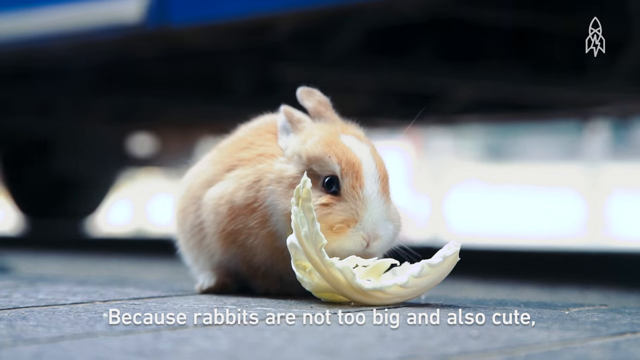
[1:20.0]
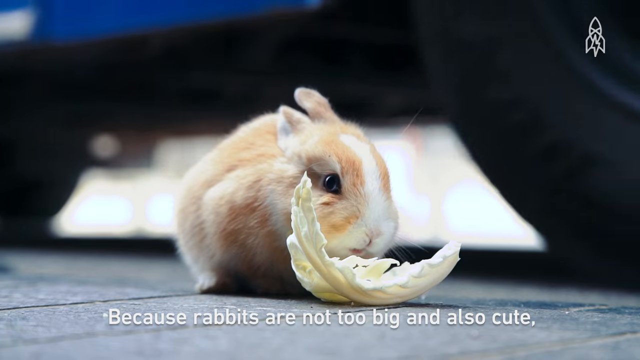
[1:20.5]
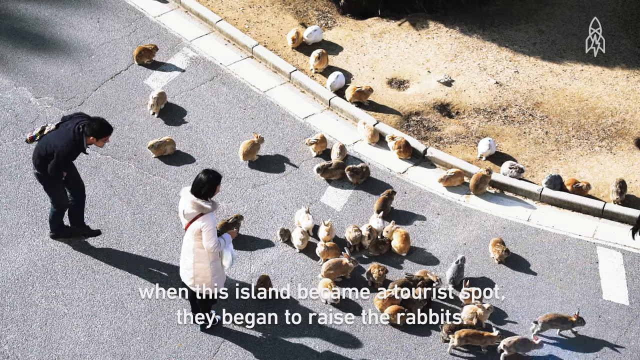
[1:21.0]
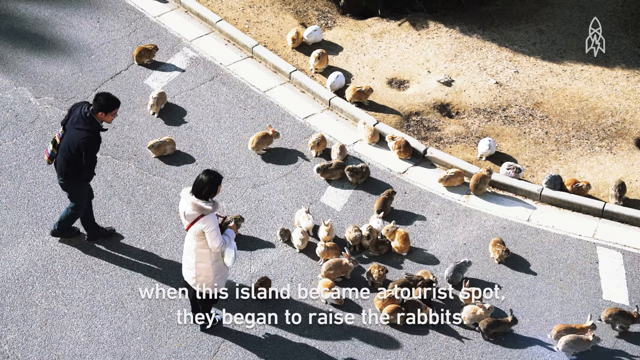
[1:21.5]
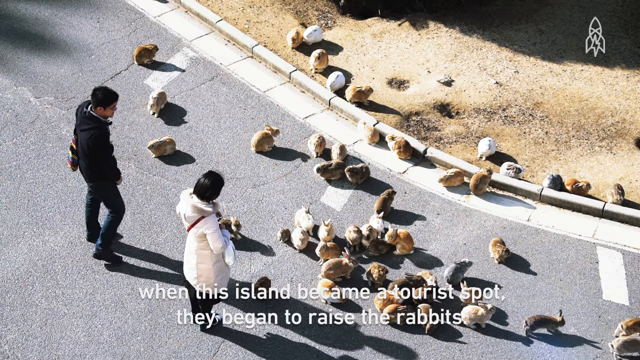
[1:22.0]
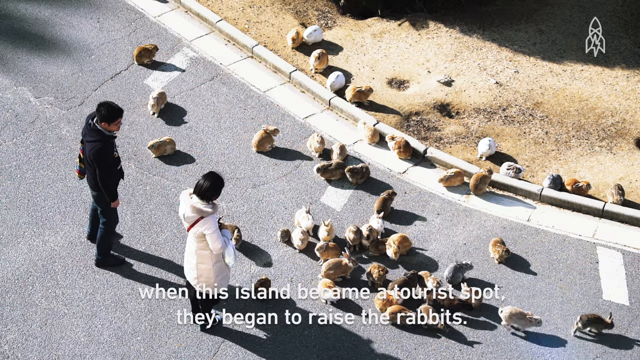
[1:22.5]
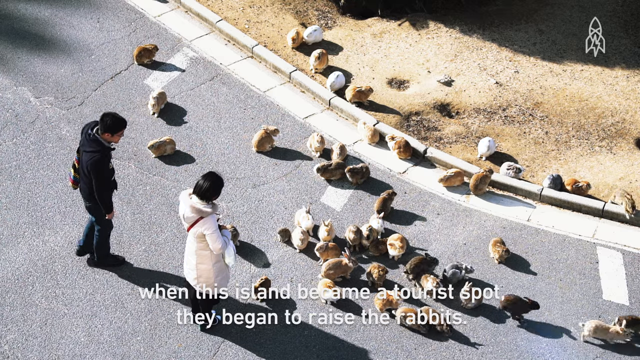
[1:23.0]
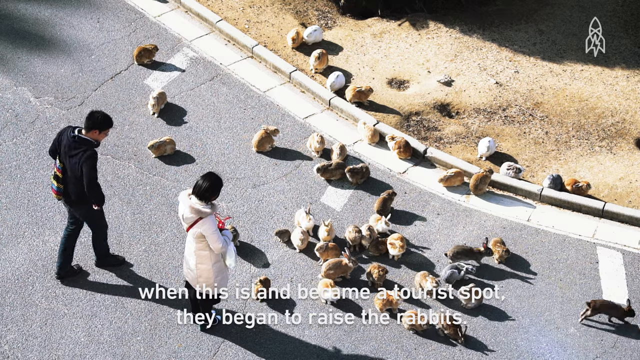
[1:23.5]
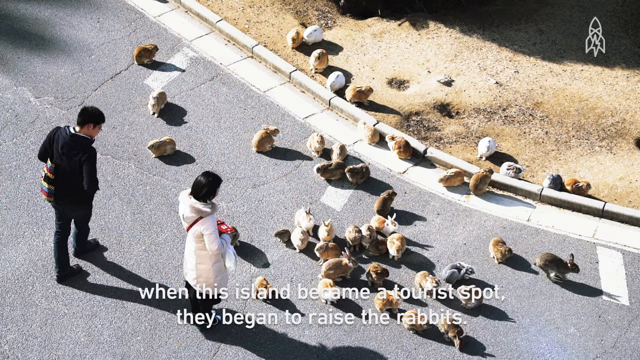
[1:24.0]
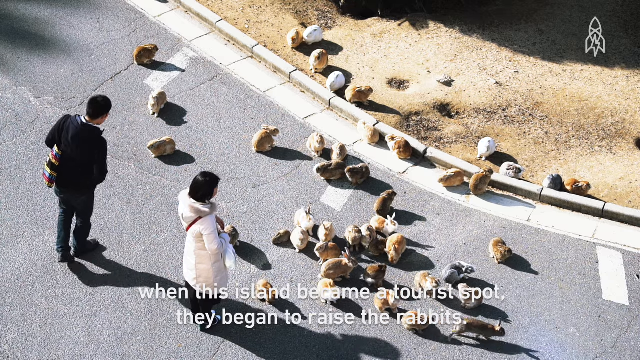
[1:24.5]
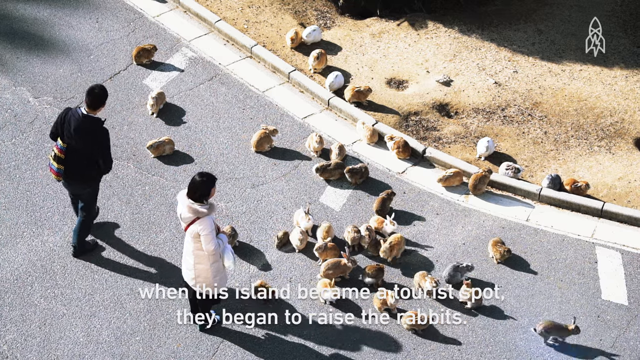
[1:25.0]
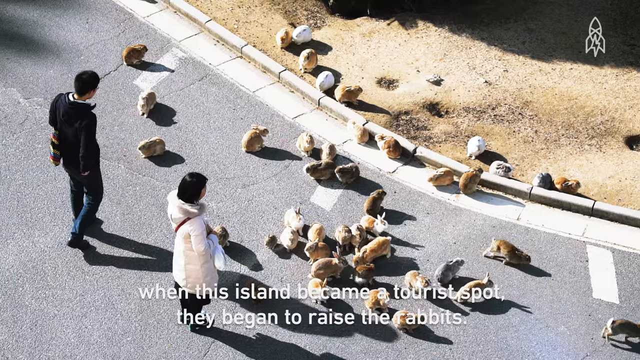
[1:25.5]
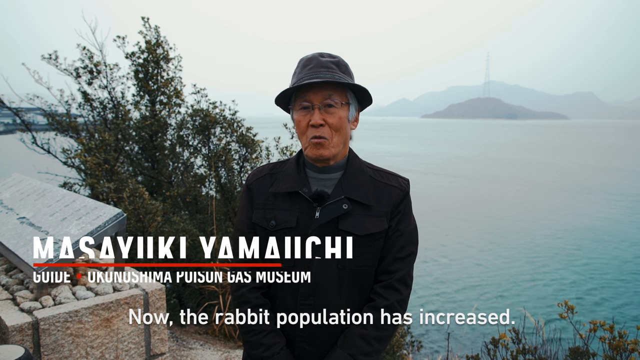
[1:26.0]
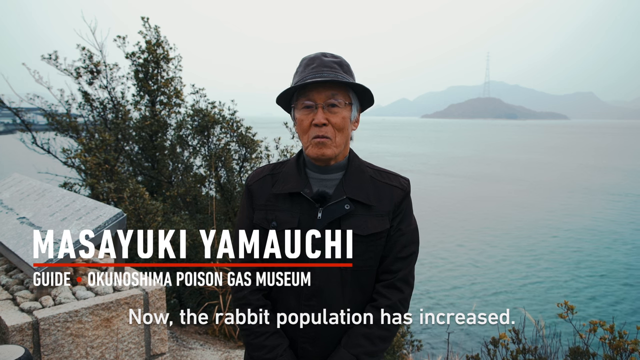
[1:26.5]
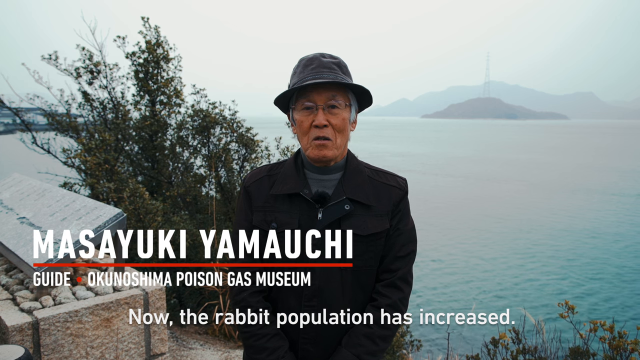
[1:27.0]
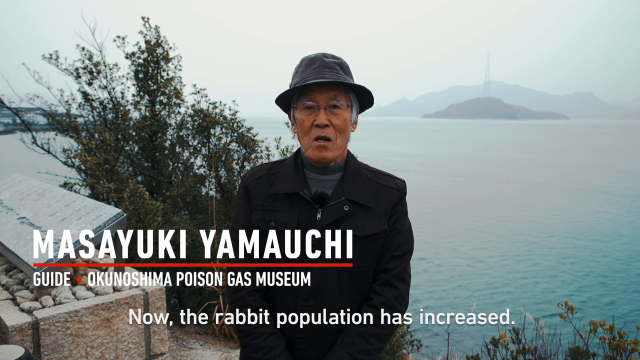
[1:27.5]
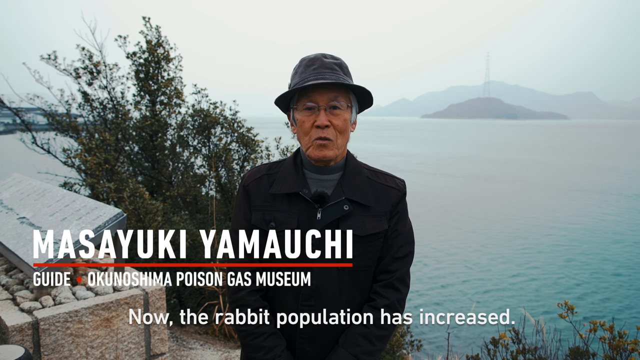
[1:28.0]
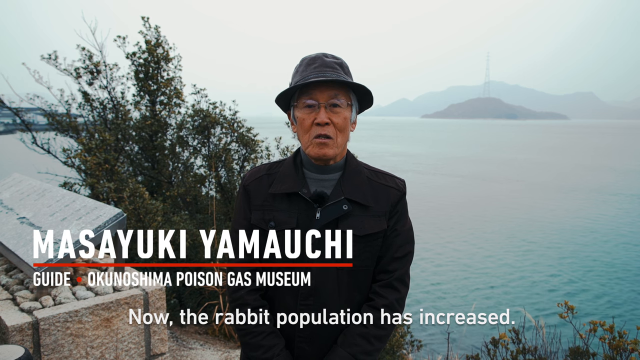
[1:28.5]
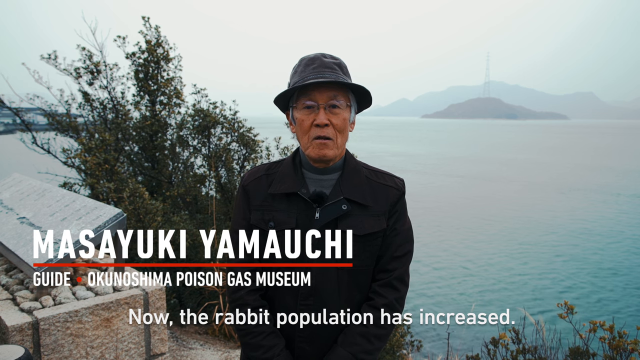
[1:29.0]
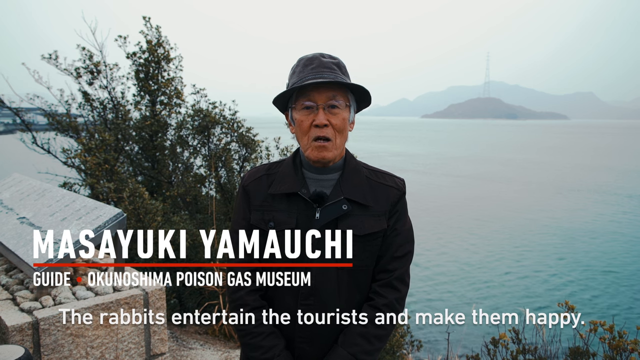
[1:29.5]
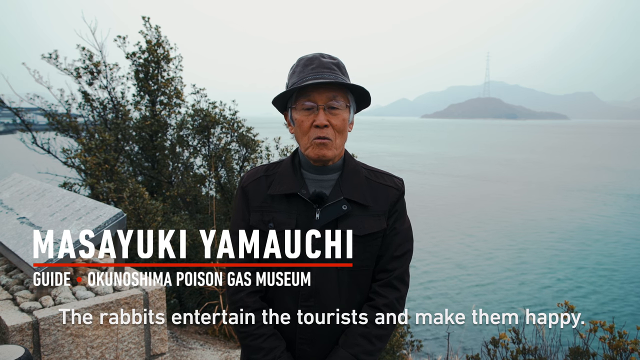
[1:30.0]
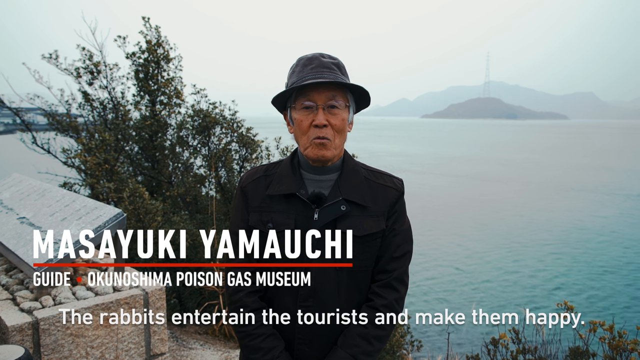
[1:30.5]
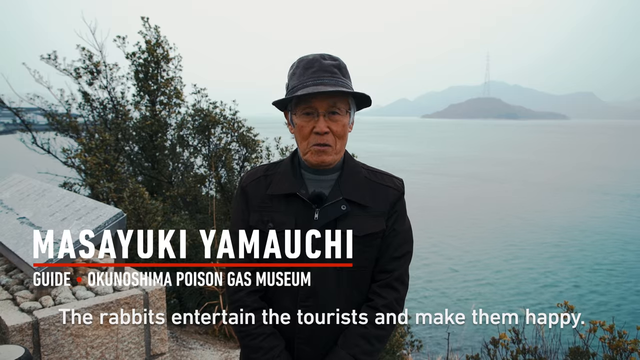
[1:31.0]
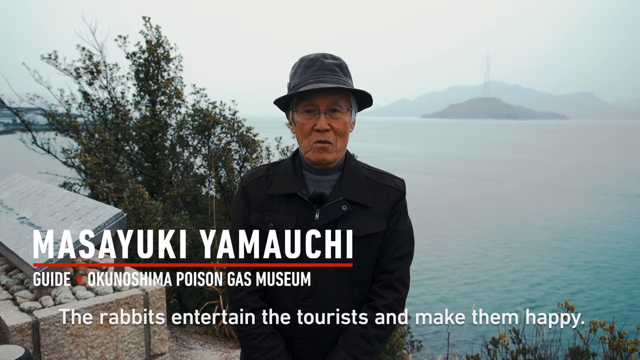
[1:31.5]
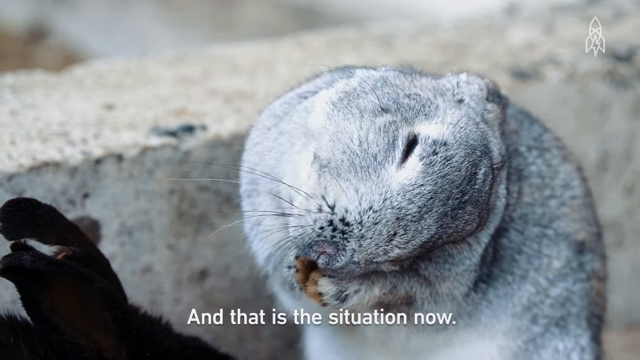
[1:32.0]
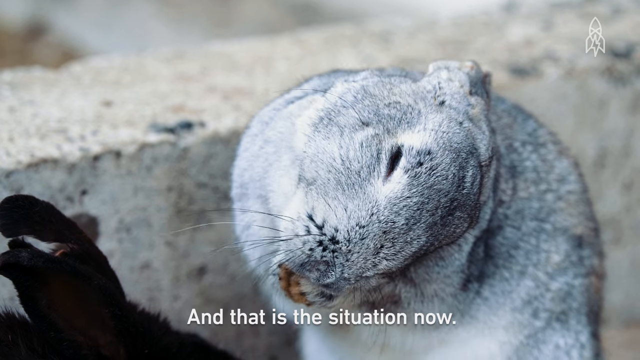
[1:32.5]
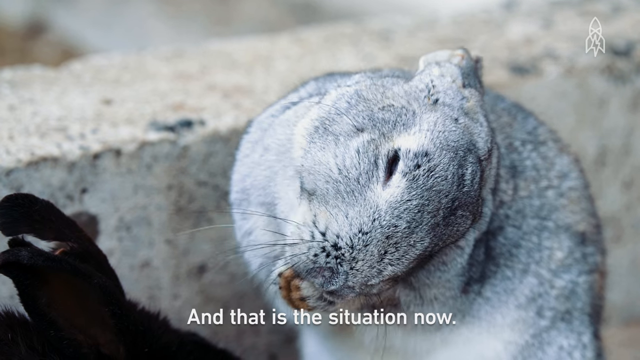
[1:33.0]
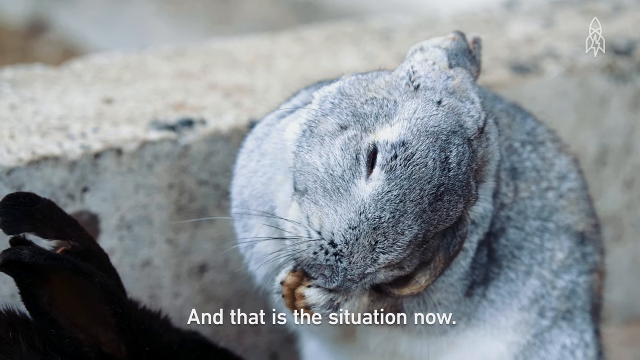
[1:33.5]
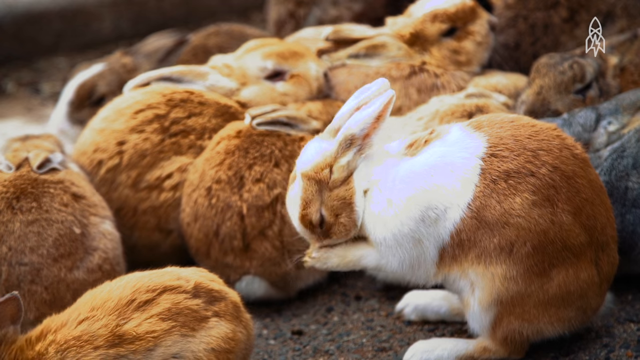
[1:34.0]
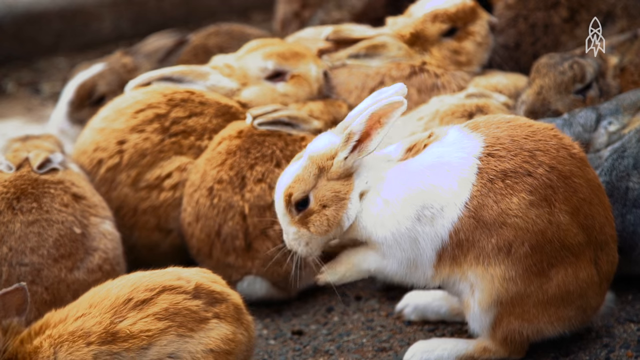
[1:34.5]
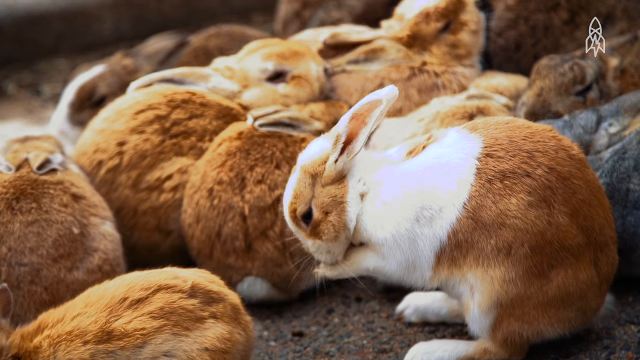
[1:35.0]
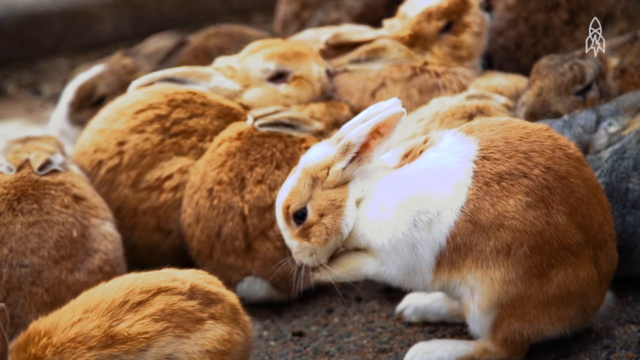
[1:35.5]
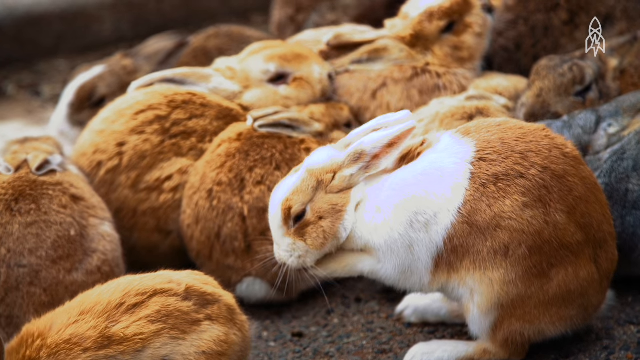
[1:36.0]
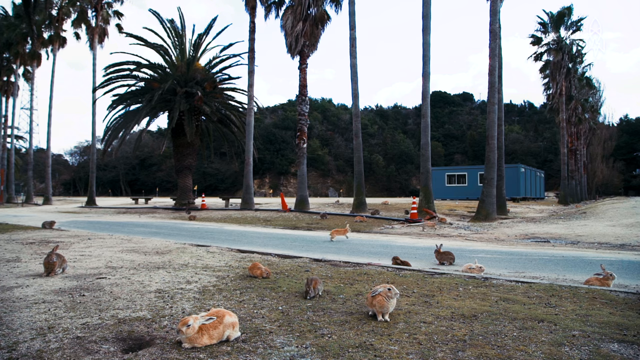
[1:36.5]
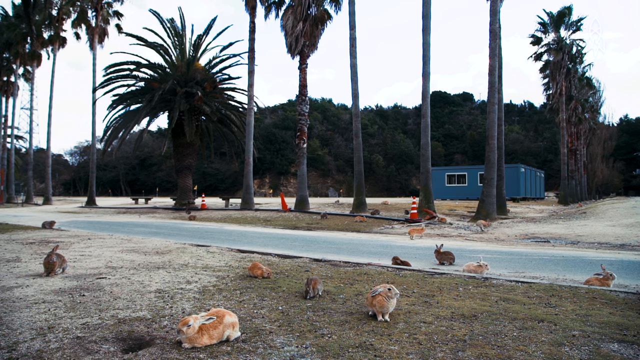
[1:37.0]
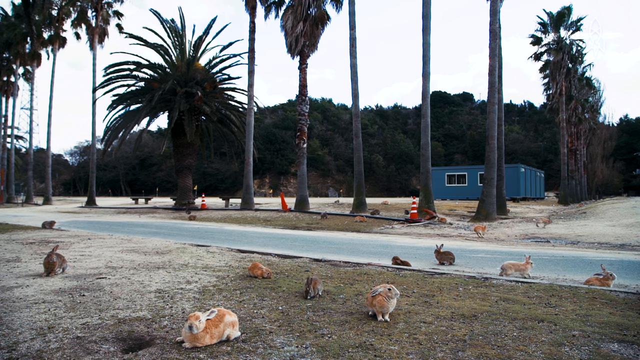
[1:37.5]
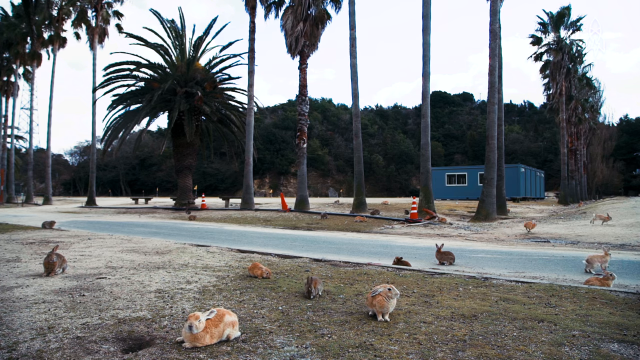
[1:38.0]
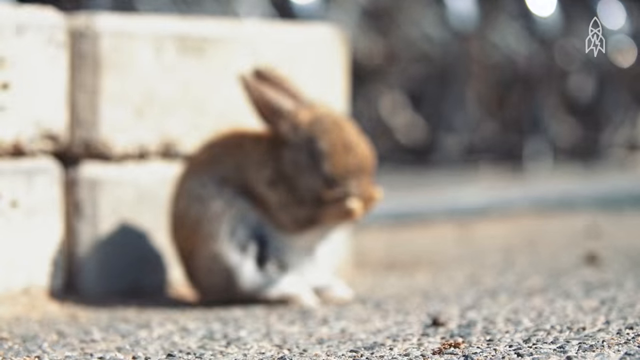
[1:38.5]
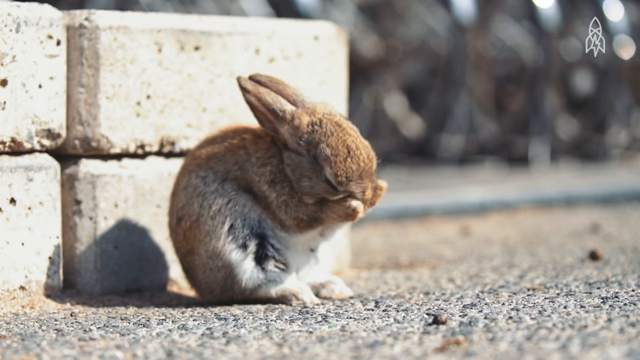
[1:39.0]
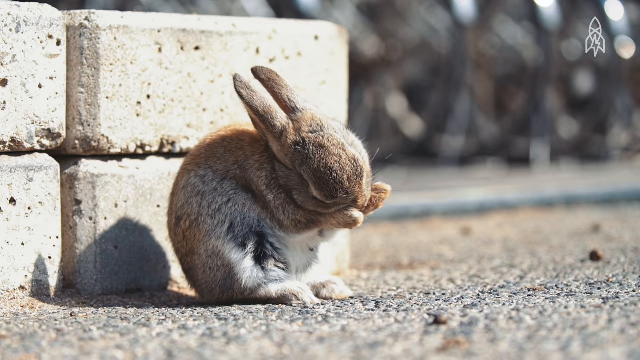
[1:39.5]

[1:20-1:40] A man in a black coat and black hat is talking; he says he is a guide, and he appears to be talking about the environment. Behind him is a view of a blue sea. The video then switches to rabbits running and walking around, nibbling on whatever they can find. A man and a woman are also there.